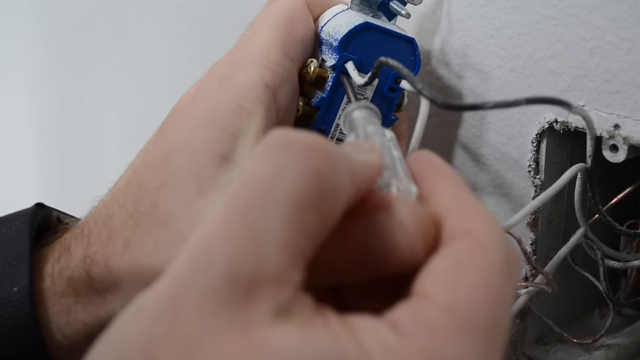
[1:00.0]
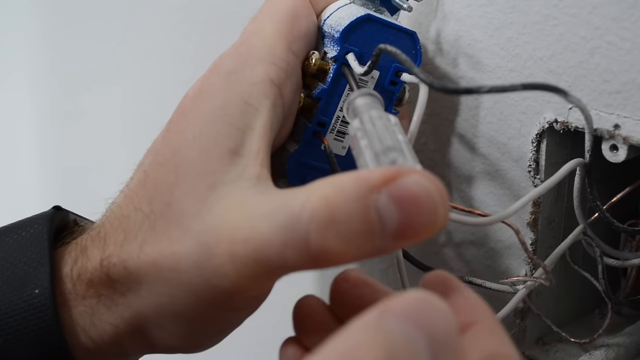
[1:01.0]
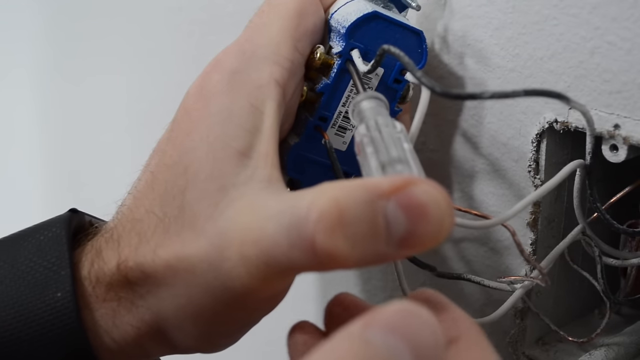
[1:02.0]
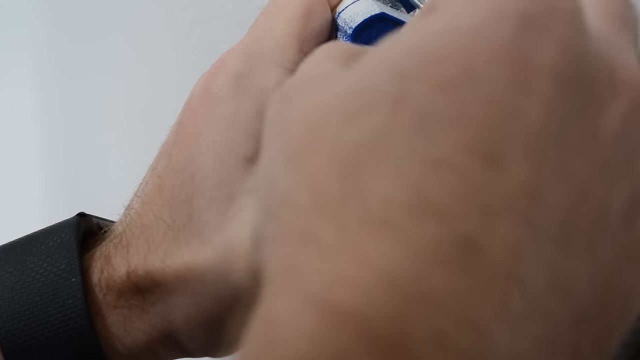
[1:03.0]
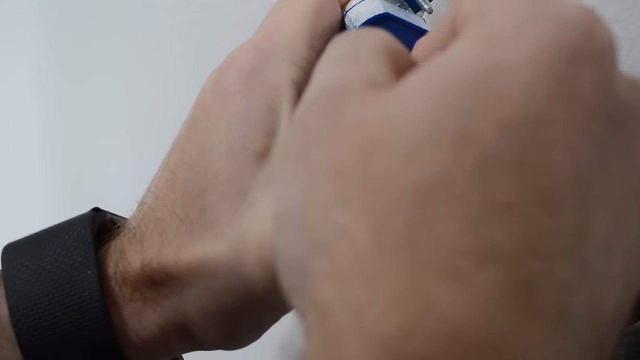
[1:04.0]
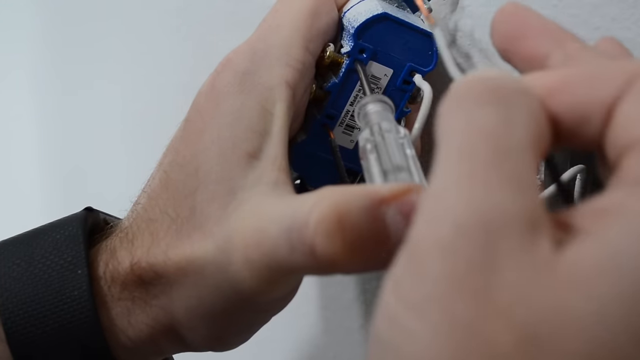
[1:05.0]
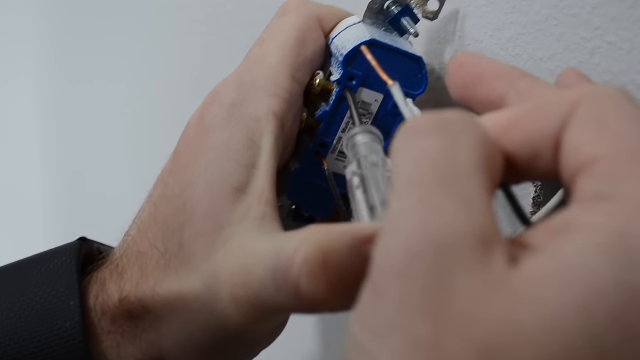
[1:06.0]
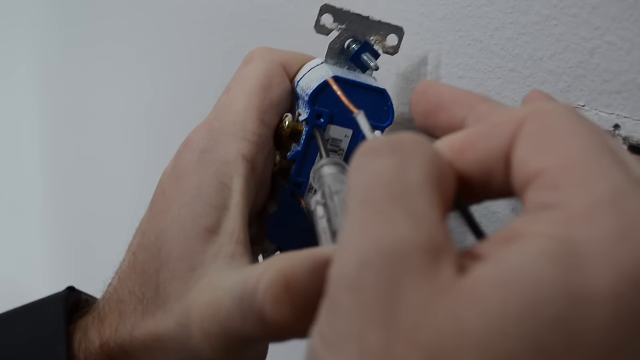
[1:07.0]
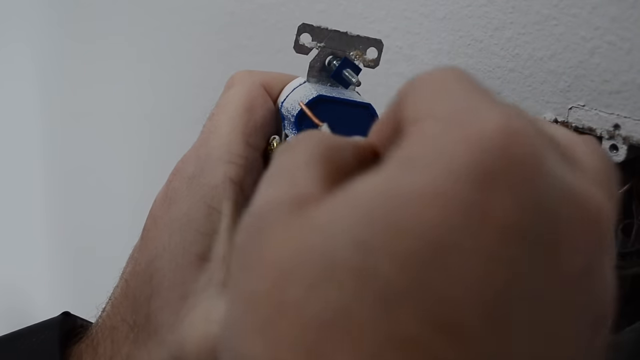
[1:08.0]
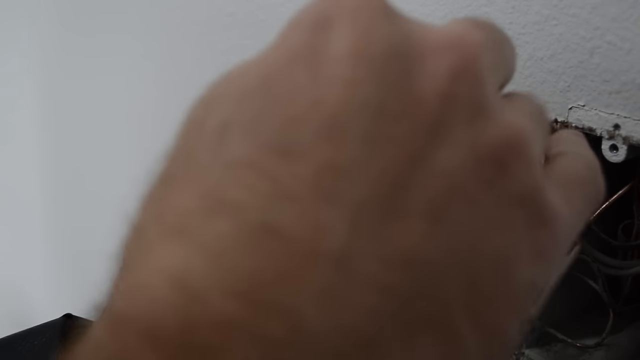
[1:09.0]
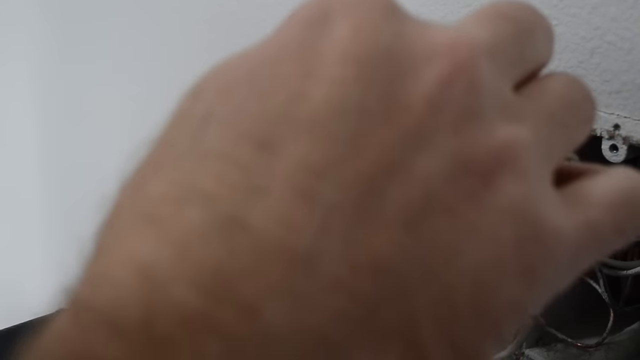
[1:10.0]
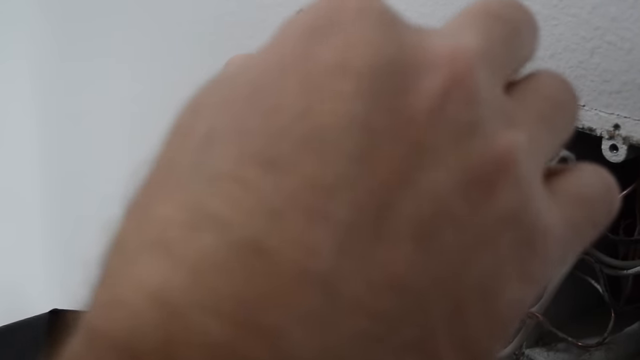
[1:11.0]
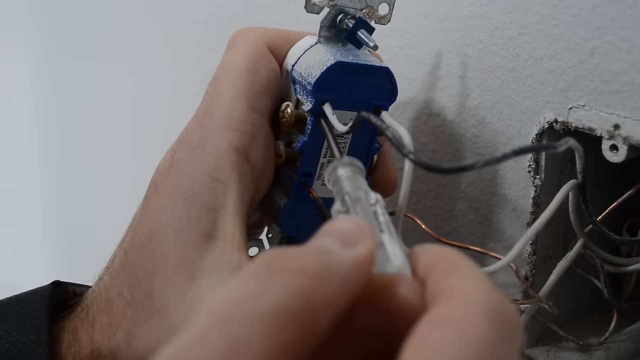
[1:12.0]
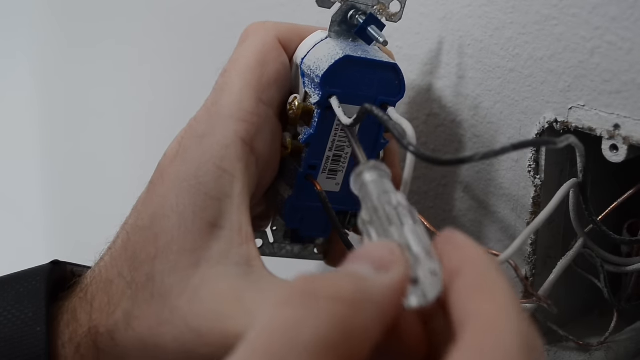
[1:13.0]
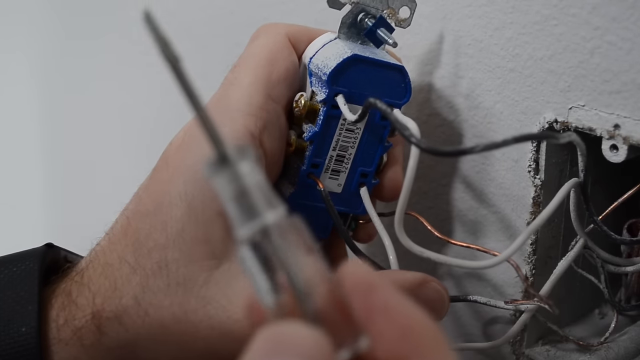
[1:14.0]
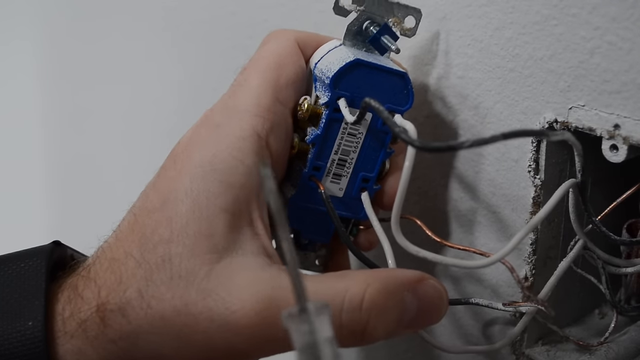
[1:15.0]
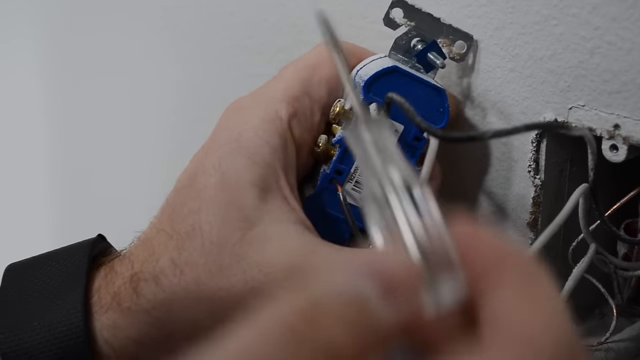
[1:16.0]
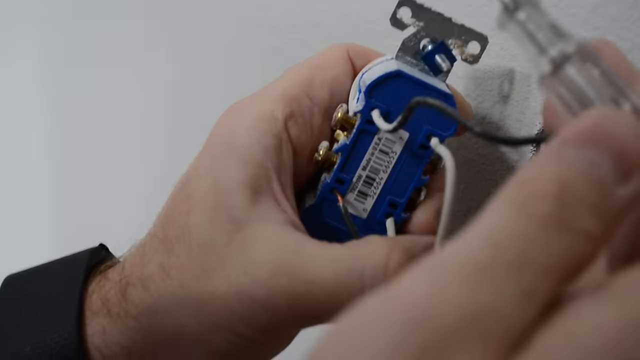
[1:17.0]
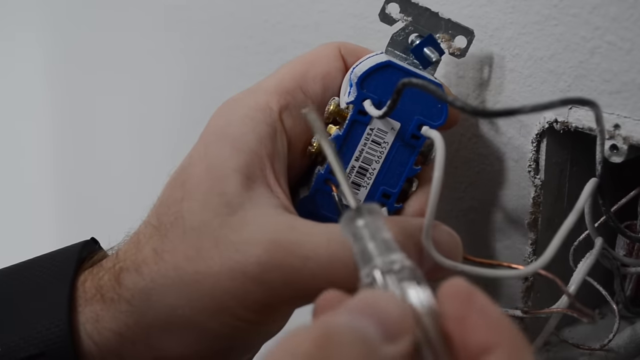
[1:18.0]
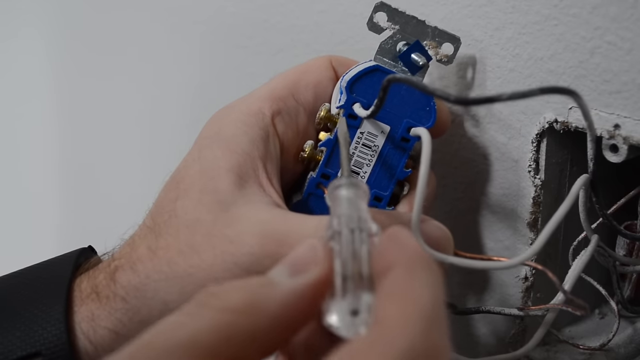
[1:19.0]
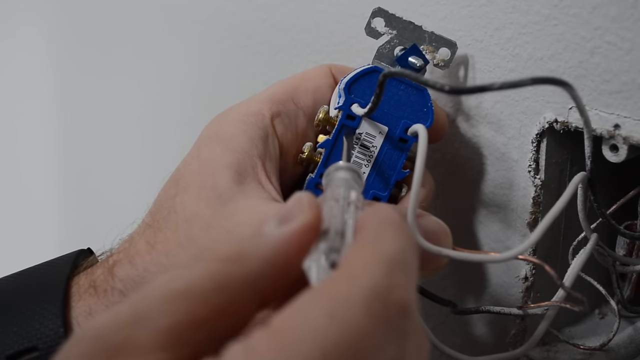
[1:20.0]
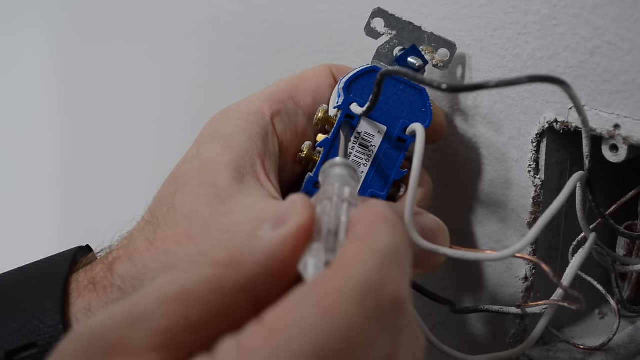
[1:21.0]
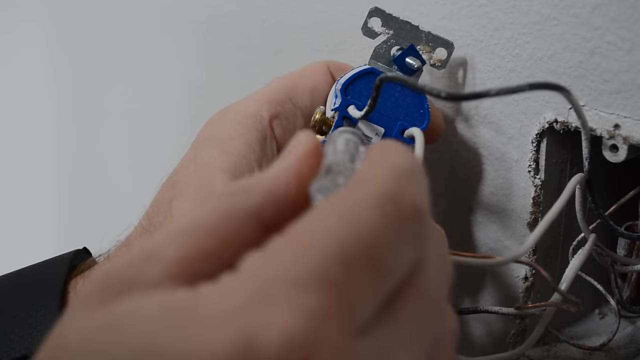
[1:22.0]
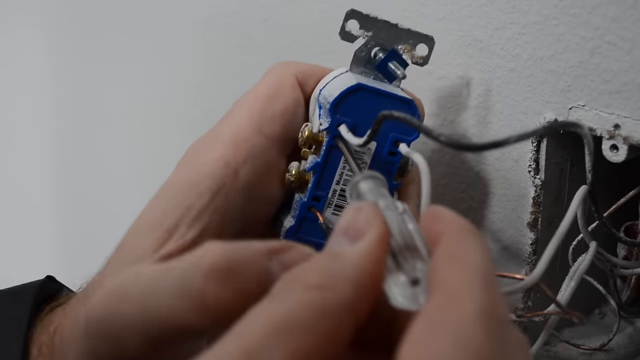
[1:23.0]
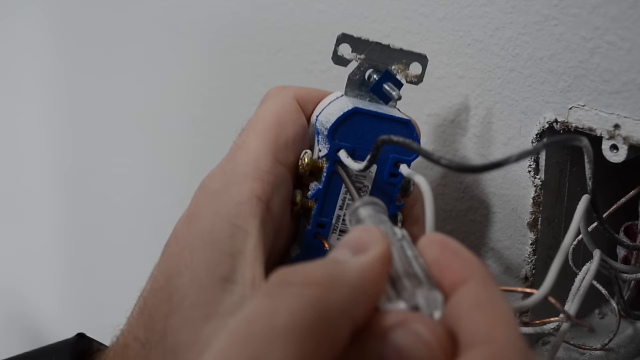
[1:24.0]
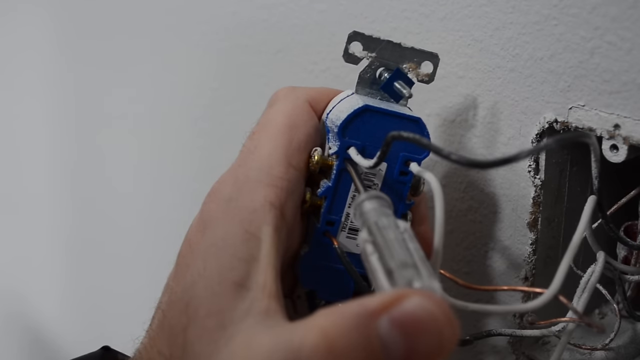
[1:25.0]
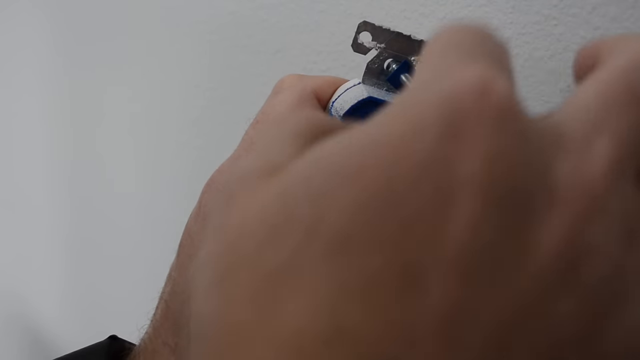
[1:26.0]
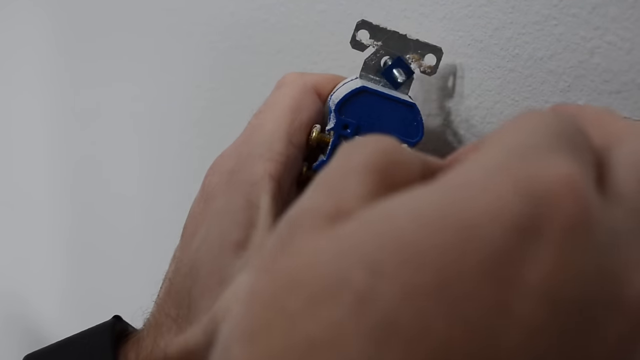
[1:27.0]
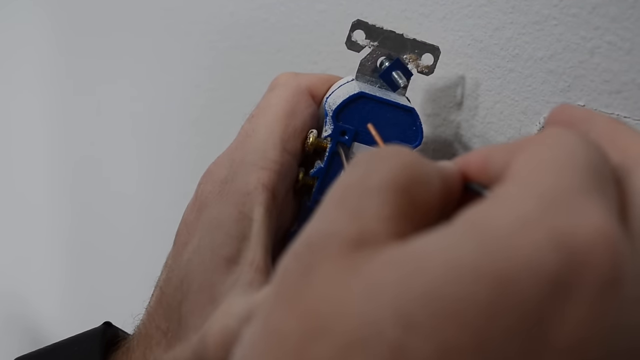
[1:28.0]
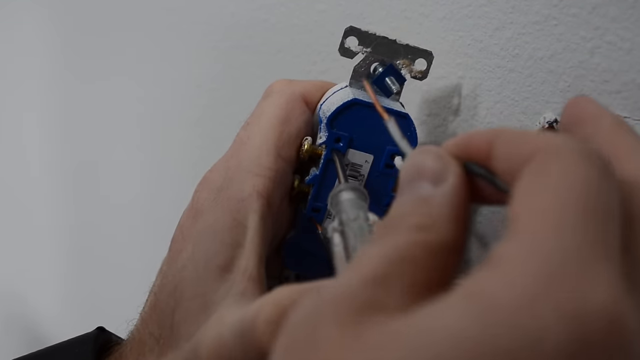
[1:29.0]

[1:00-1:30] The man puts the screwdriver into the hole, turns it around, and pulls off the first wire. He then puts the wire back to demonstrate the process once more, holding the screwdriver inside the hole while pulling the wire out.